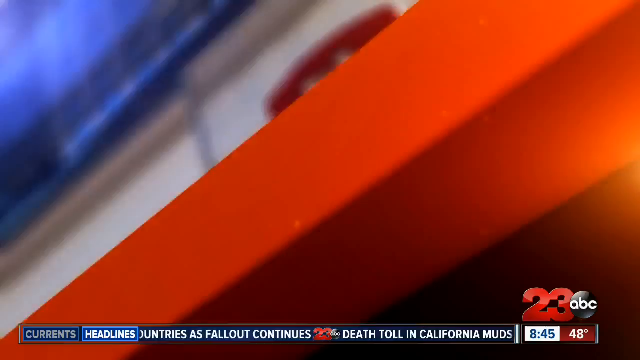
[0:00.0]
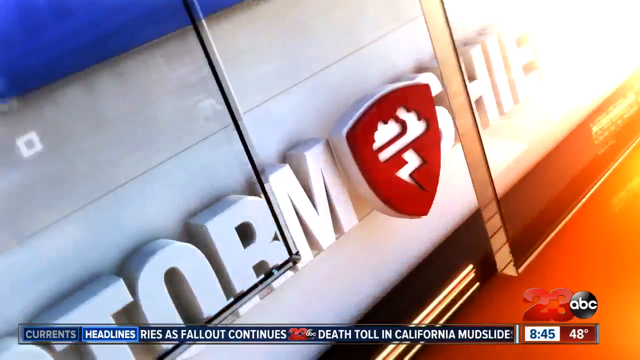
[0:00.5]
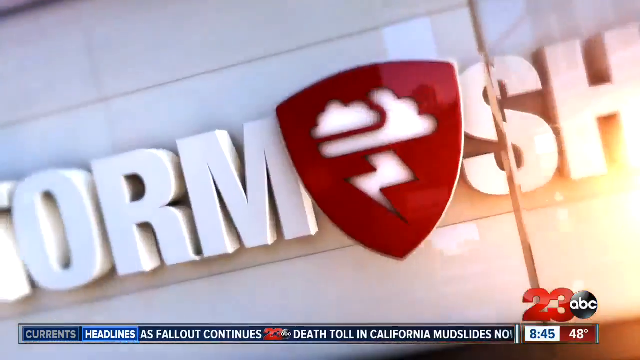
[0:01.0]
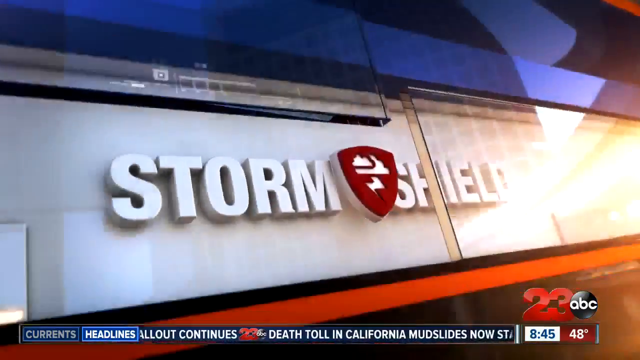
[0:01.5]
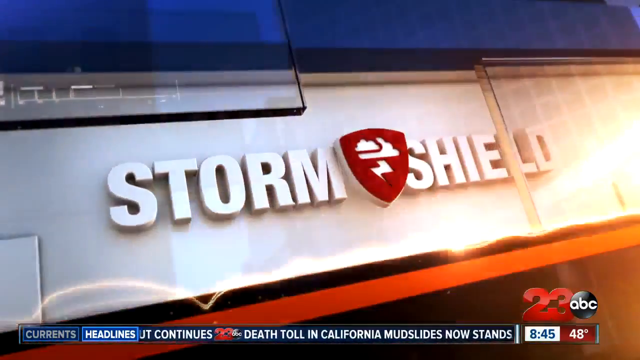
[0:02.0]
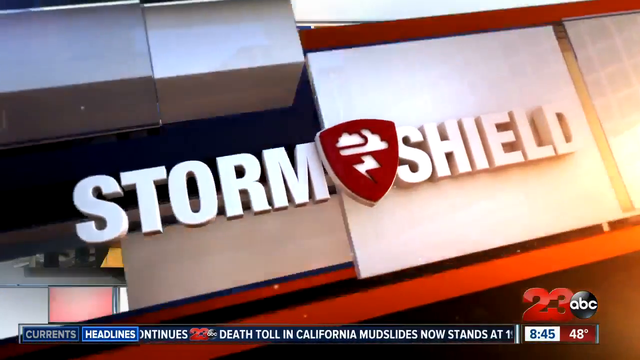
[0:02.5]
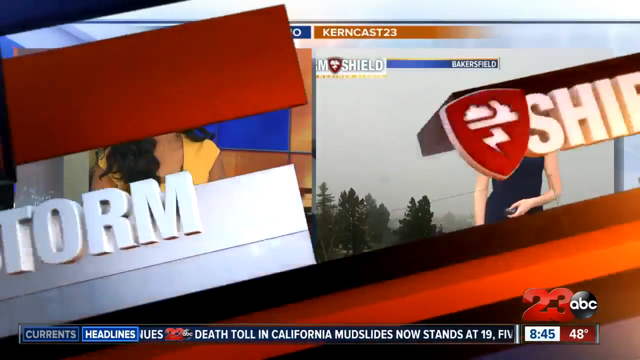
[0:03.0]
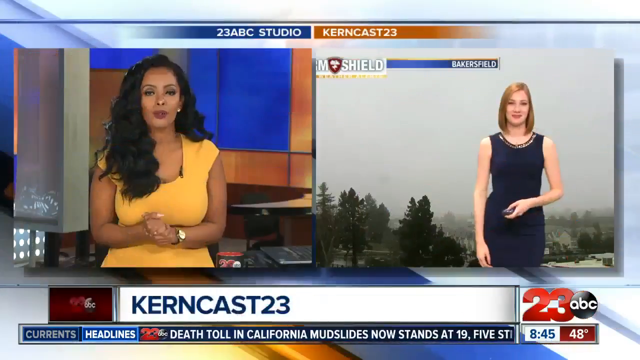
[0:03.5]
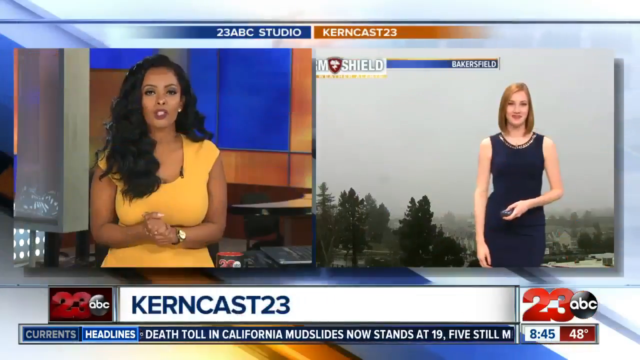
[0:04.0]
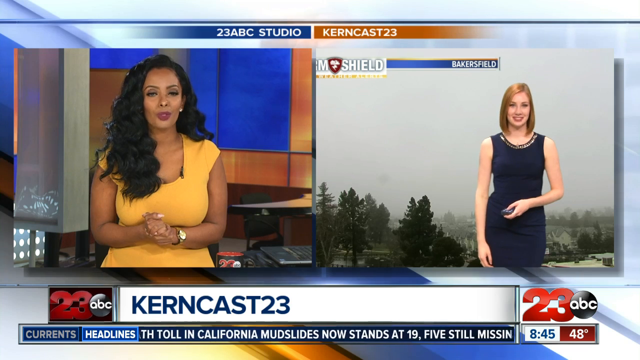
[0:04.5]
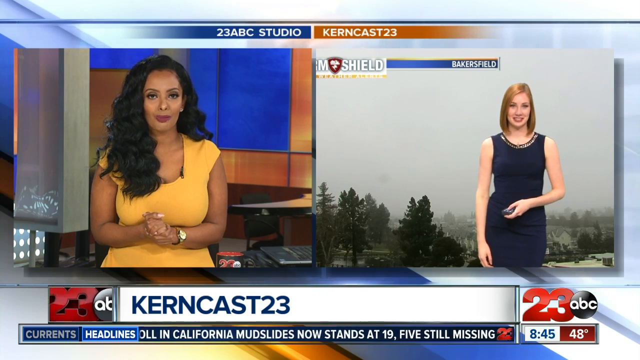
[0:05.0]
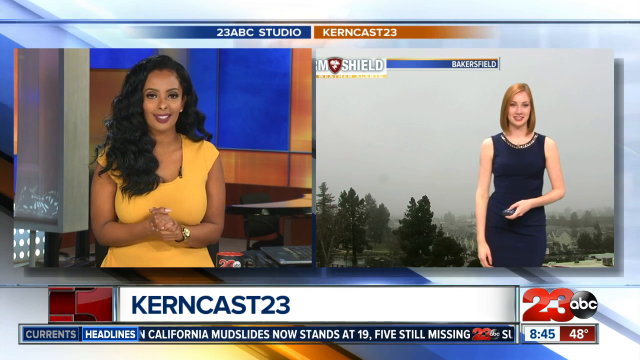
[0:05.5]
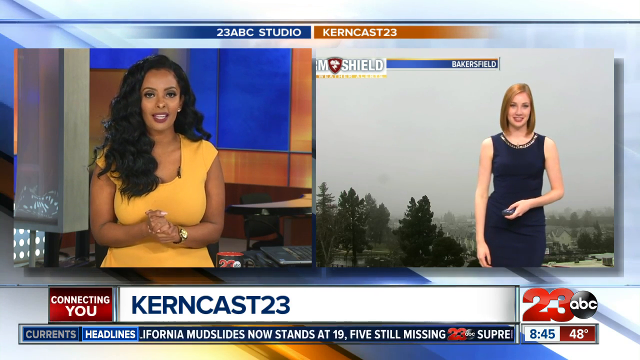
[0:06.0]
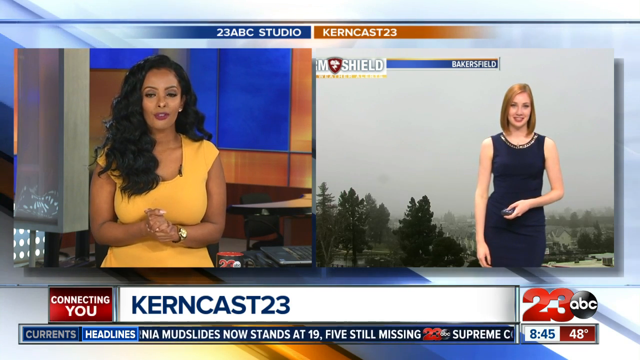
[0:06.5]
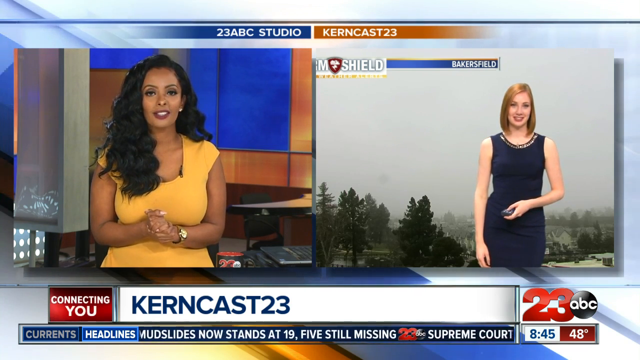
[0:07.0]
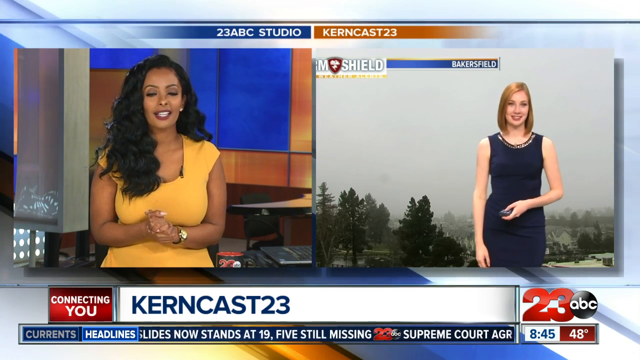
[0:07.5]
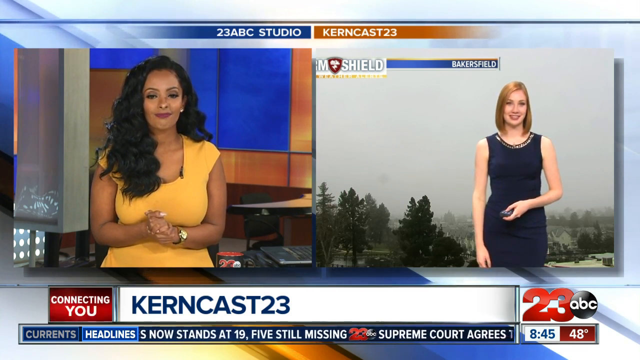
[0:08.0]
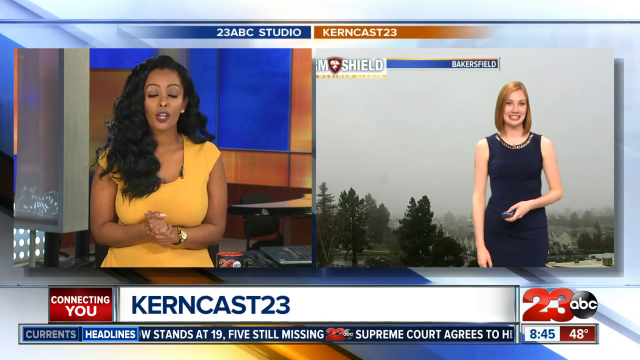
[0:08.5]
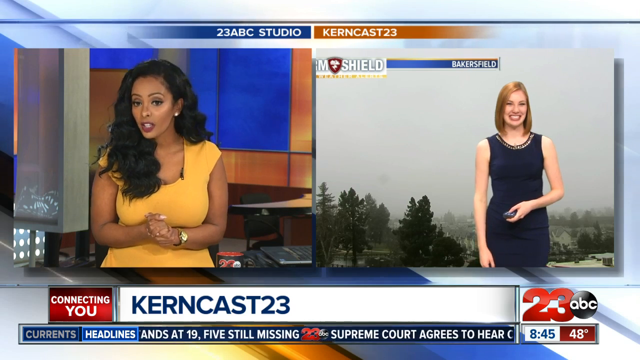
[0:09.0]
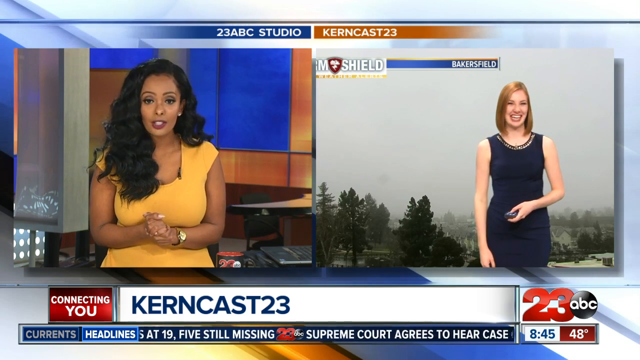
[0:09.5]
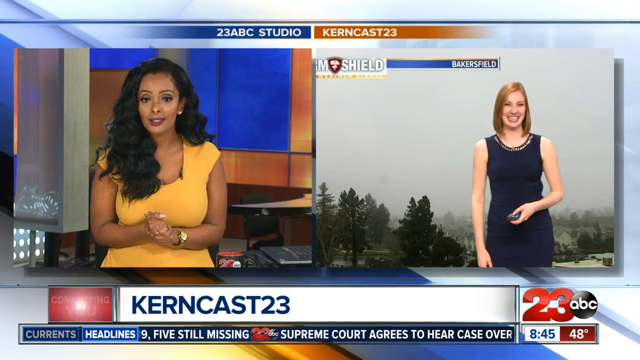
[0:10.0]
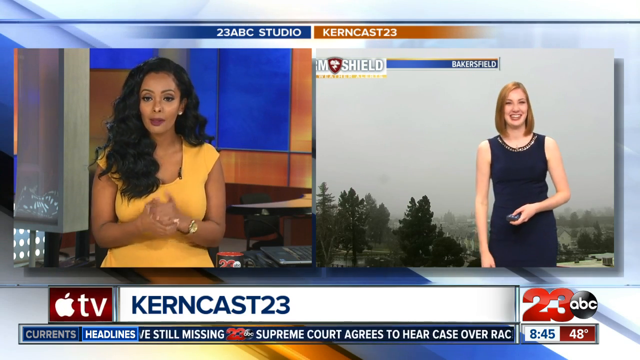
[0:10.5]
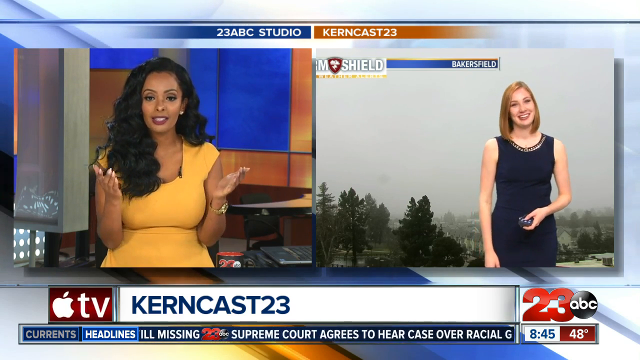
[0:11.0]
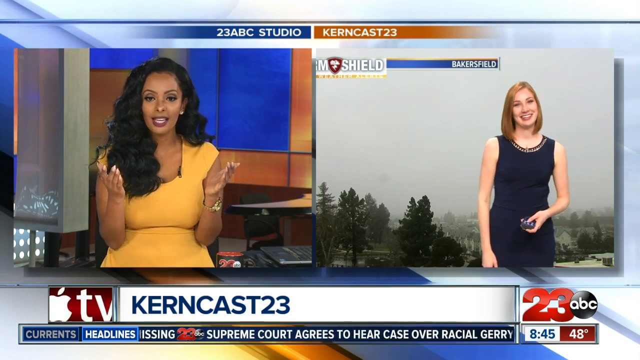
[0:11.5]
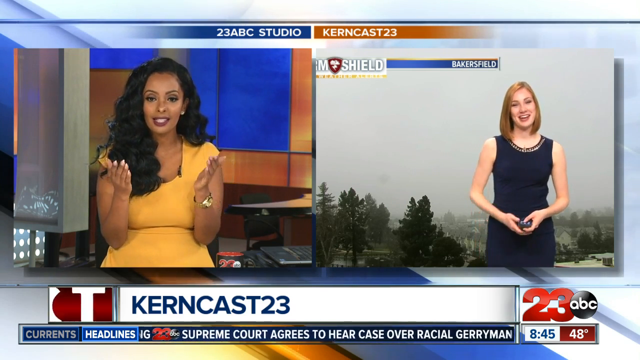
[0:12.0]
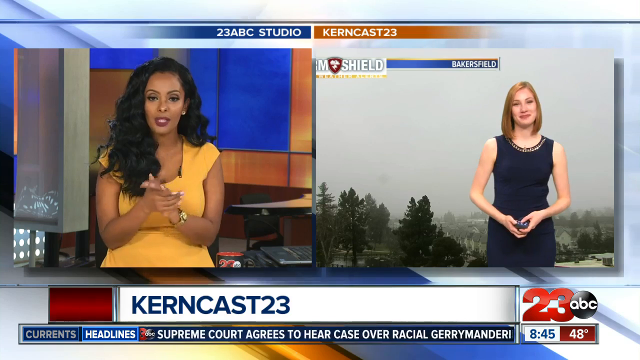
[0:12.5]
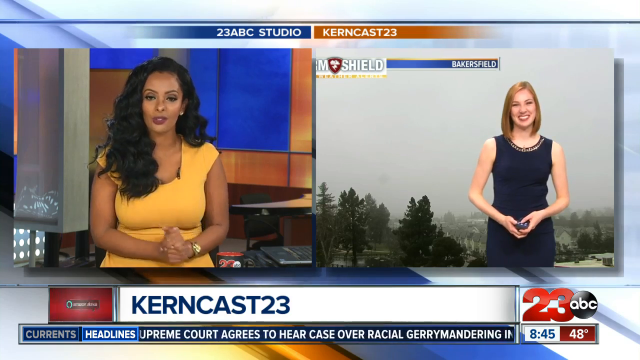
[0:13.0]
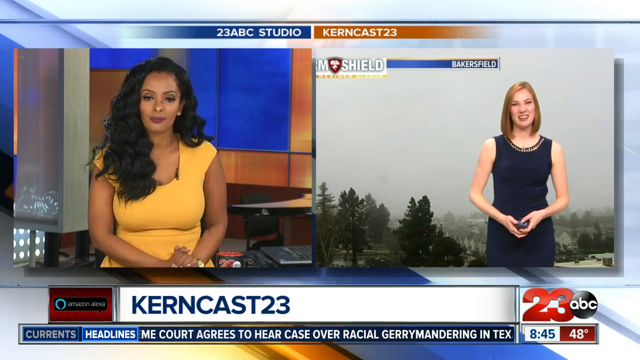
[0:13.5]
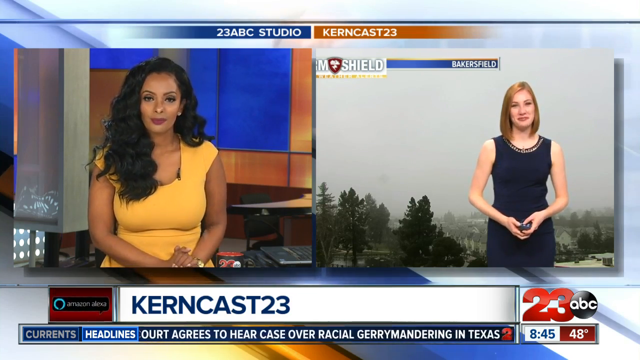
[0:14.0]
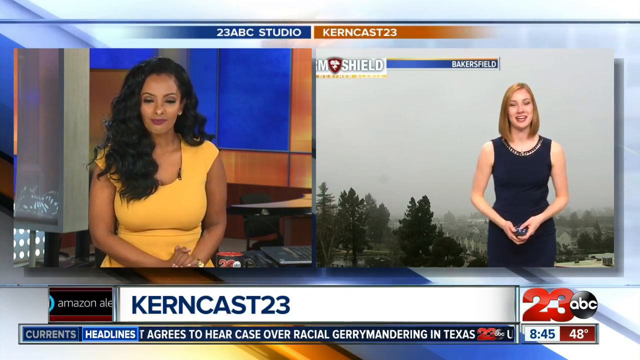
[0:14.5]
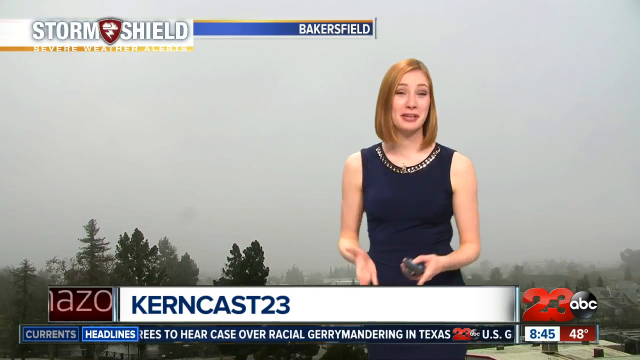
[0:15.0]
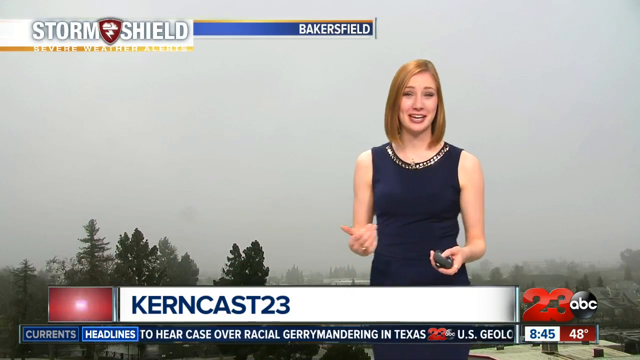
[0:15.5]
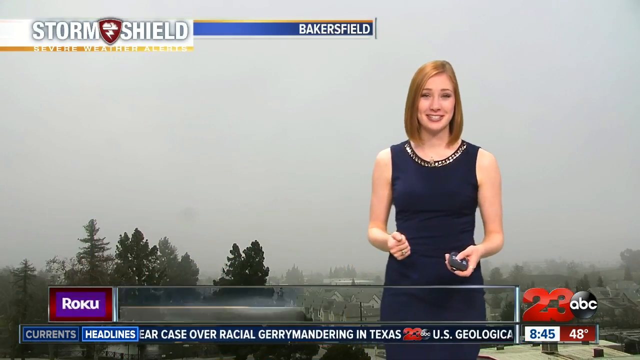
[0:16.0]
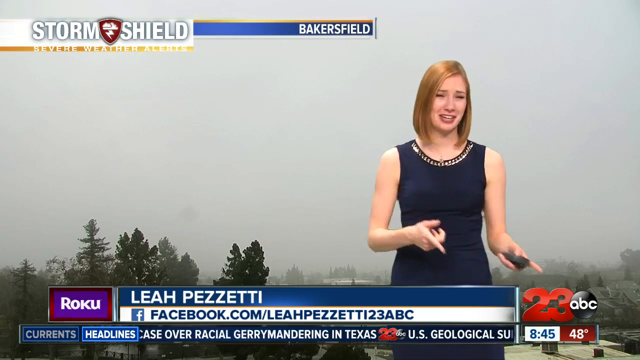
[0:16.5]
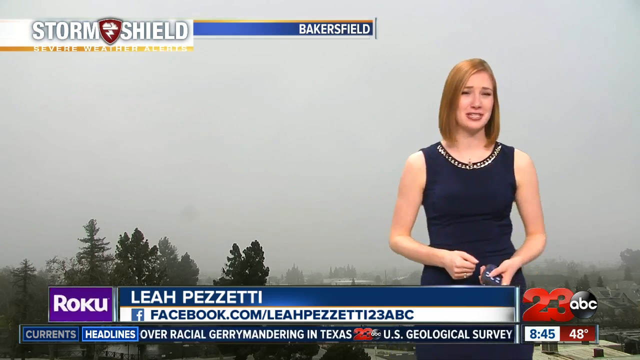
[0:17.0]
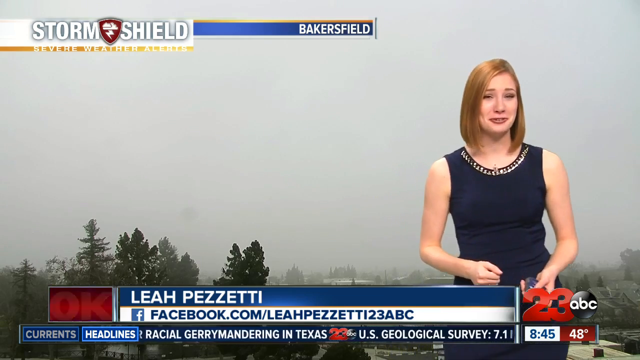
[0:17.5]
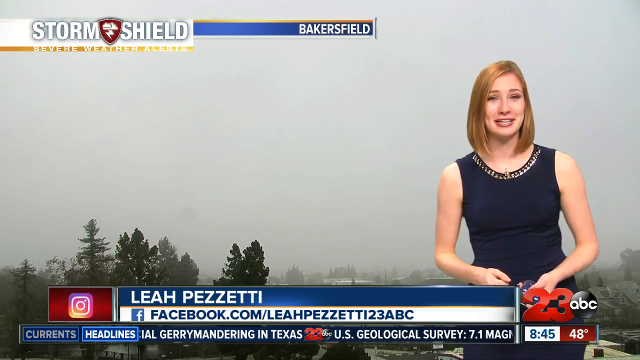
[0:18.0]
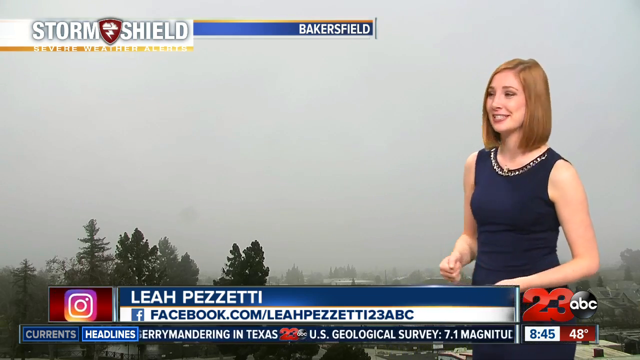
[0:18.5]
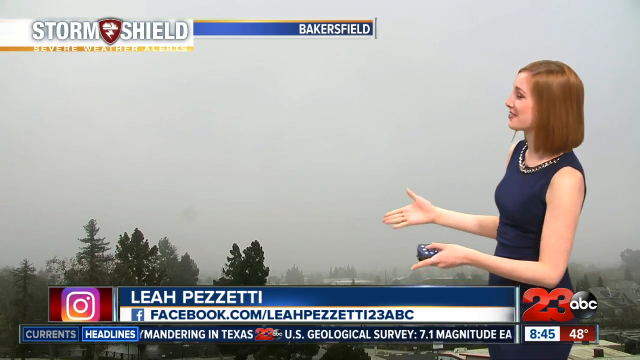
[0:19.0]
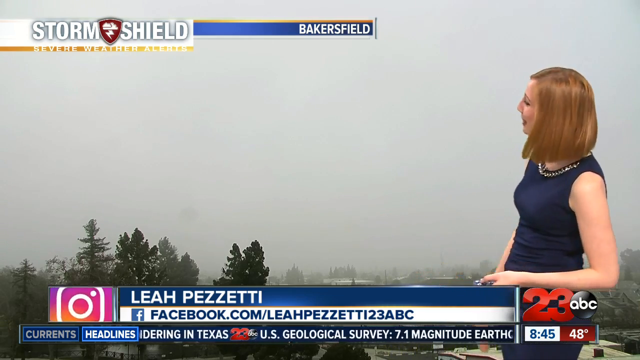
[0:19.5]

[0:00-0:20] On-screen text reads "News on Forecast" and "Storm shield." The channel is 23 ABC, Karen Cast 23. A Black American woman with curly hair is on screen, wearing a mustard short-sleeved dress and a watch on her left arm. In the 23 ABC studio, she introduces a white woman who will give the weather forecast. That woman, on the left-hand side, has brown, curved hair and wears a navy short-sleeved dress. The white woman, Leah, at Barker Field, takes over and presents the forecast. She is standing behind mountains, with trees behind her, under cloudy, dark weather that seems stormy and looks like it may rain sooner or later. In her left hand she carries a round remote controller with small buttons.